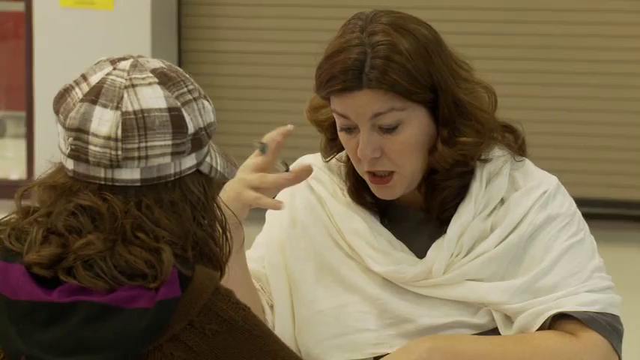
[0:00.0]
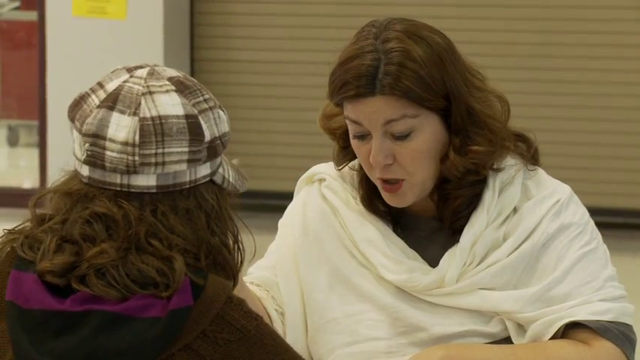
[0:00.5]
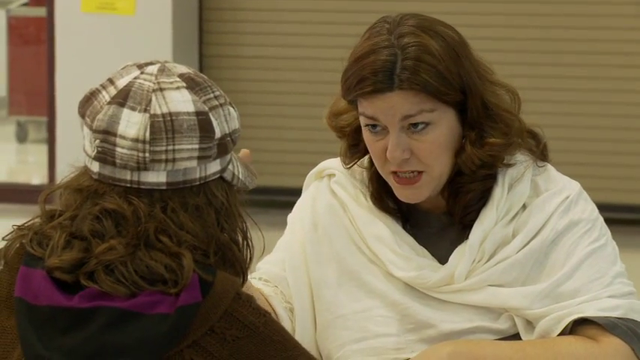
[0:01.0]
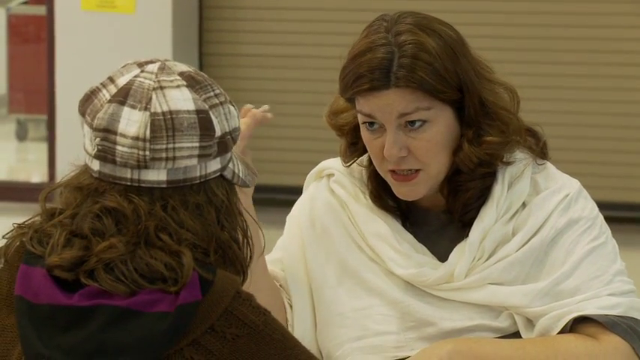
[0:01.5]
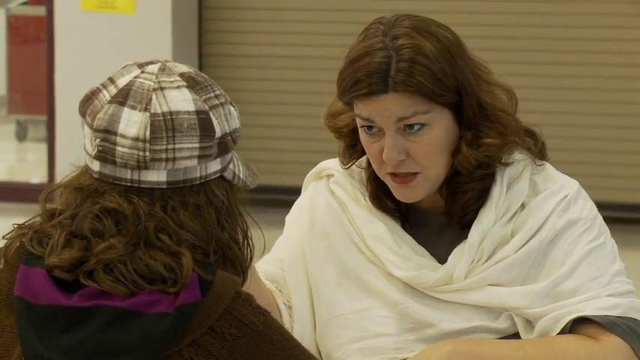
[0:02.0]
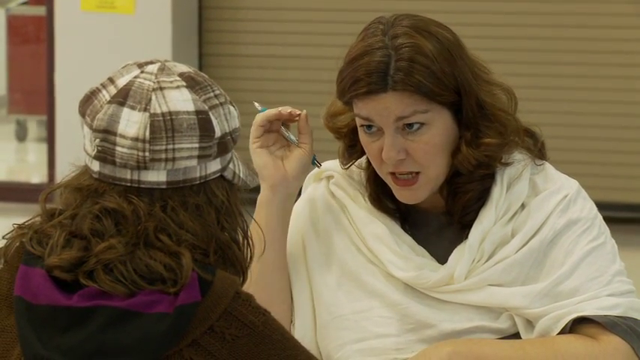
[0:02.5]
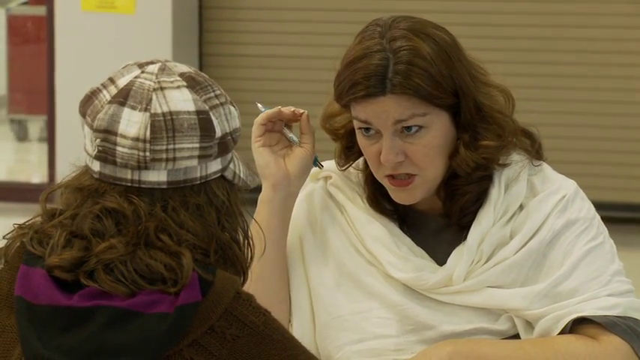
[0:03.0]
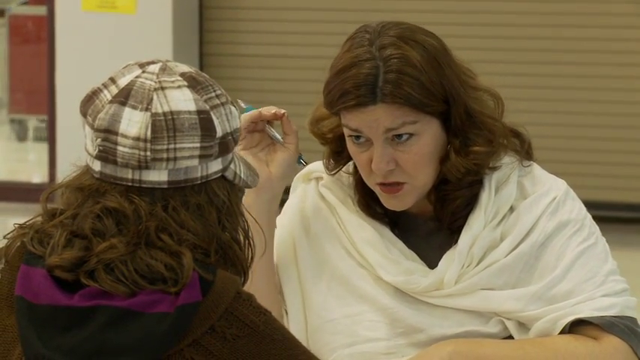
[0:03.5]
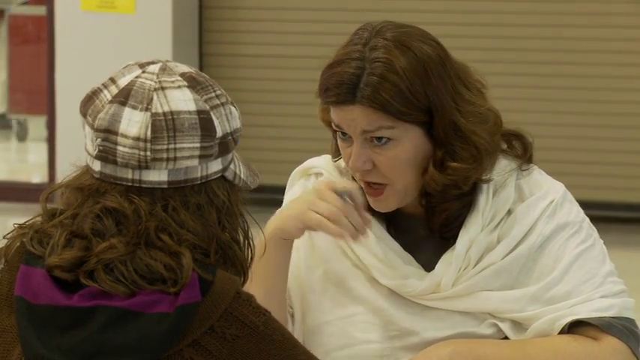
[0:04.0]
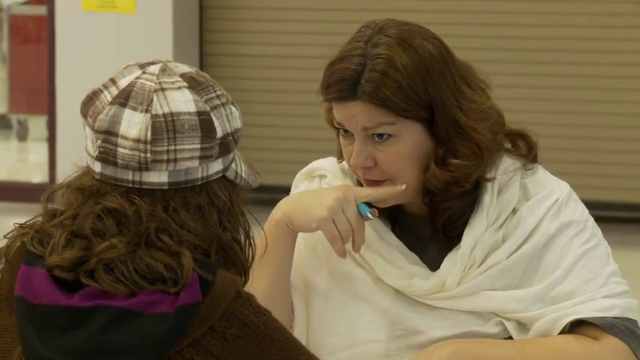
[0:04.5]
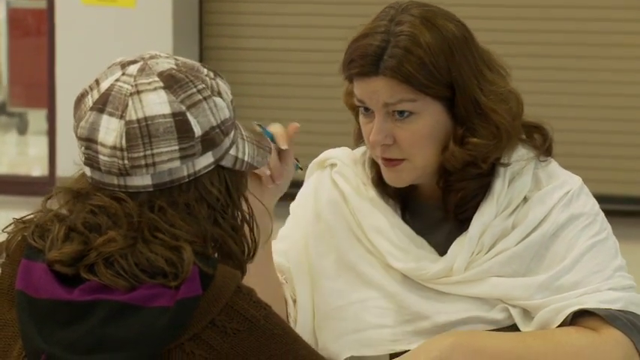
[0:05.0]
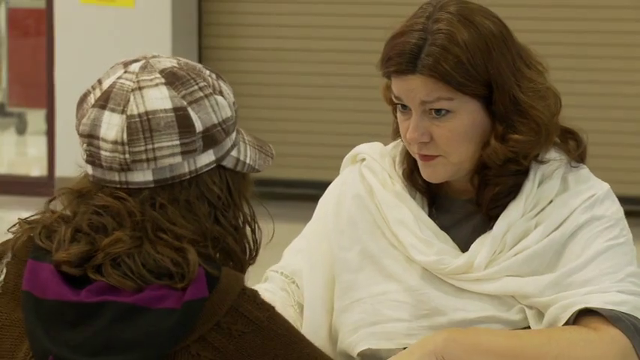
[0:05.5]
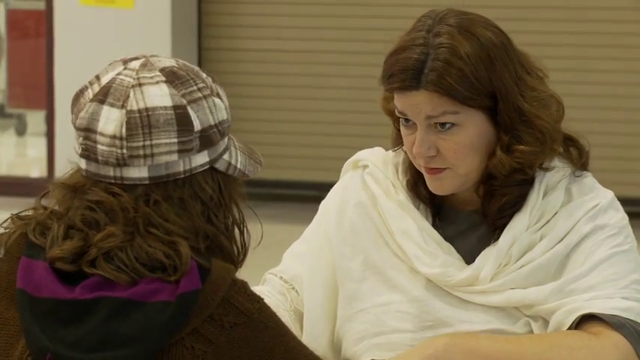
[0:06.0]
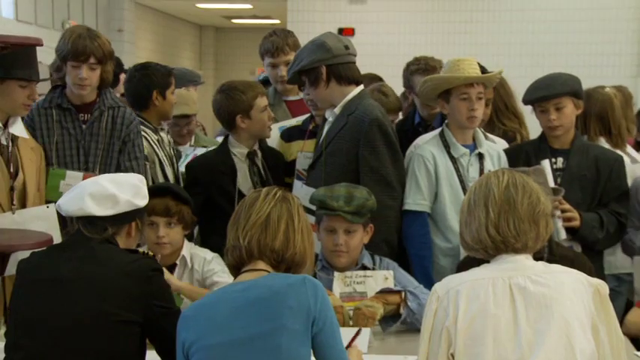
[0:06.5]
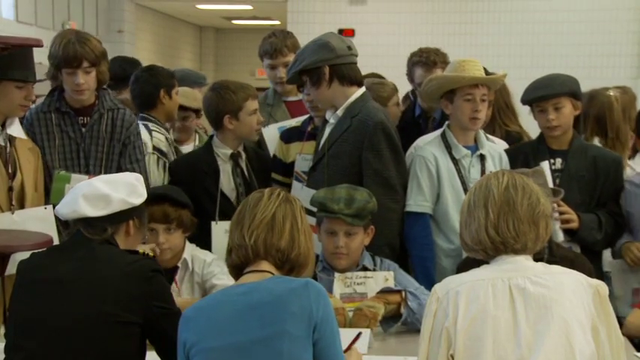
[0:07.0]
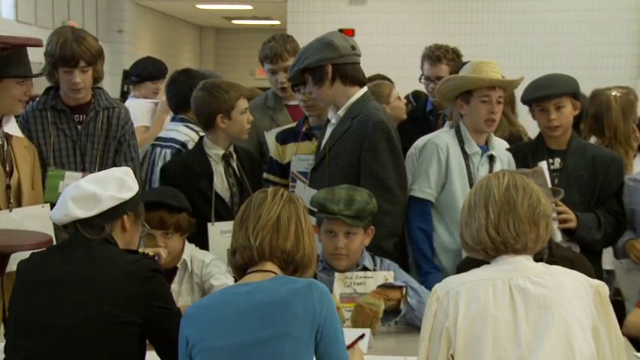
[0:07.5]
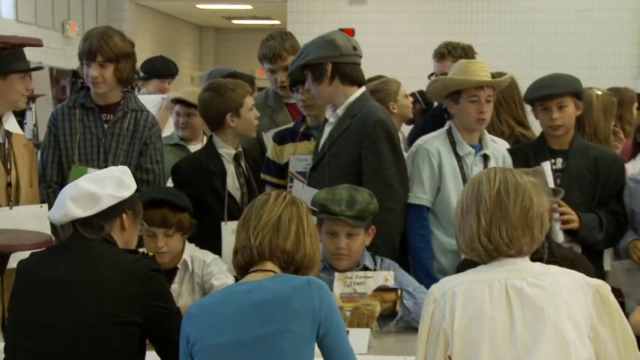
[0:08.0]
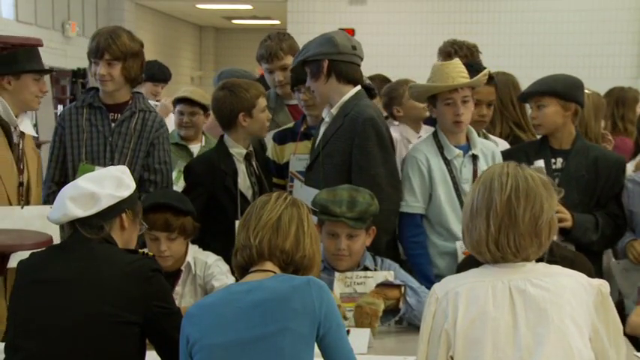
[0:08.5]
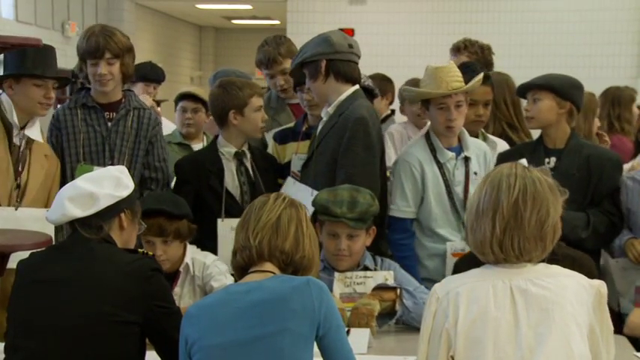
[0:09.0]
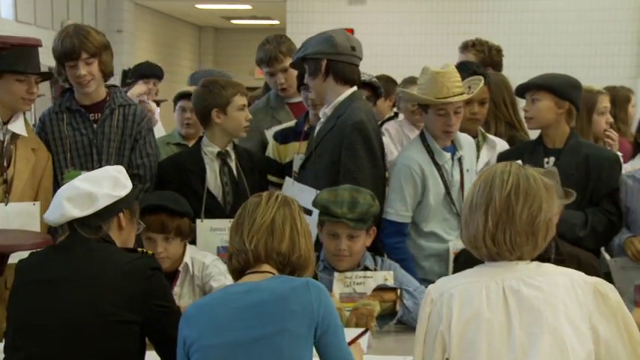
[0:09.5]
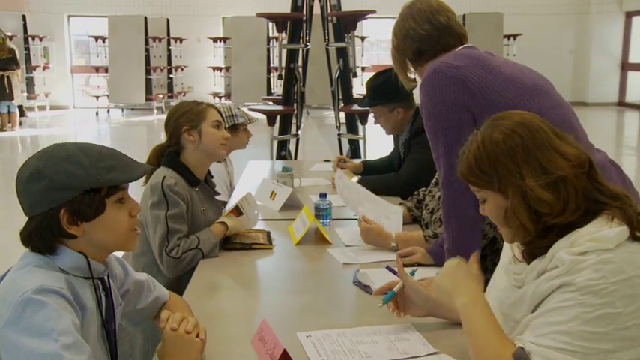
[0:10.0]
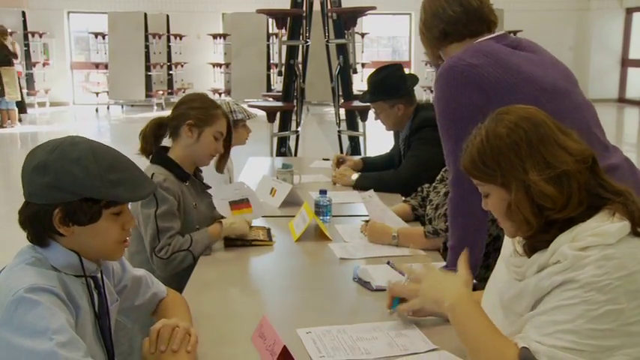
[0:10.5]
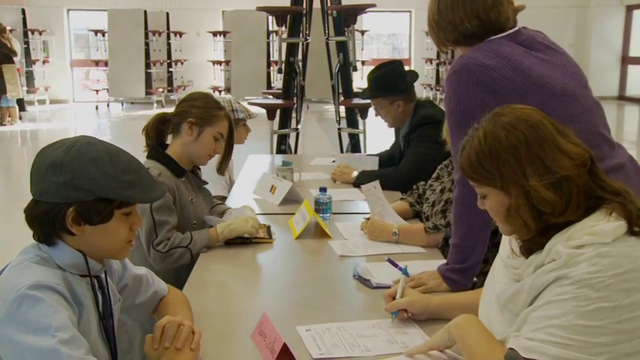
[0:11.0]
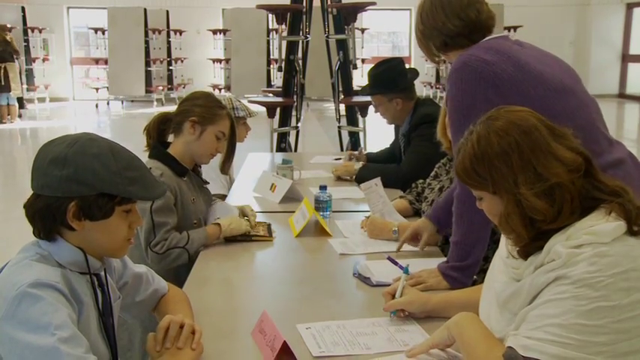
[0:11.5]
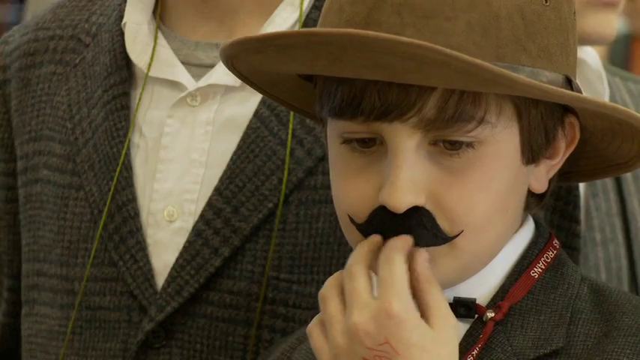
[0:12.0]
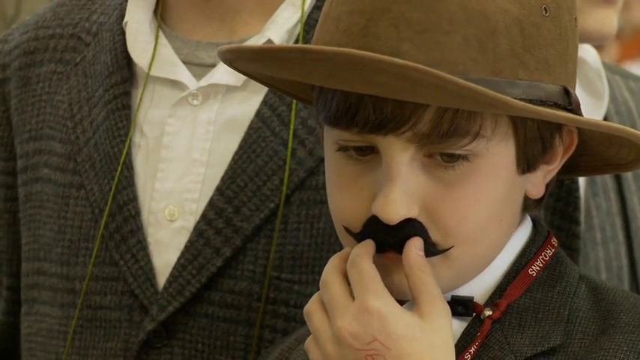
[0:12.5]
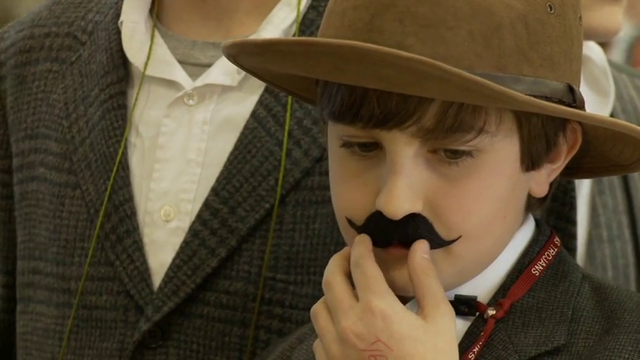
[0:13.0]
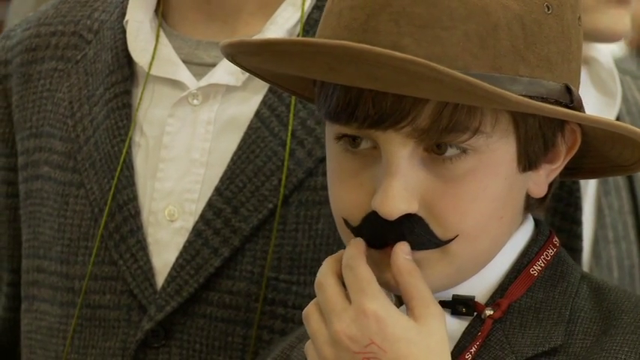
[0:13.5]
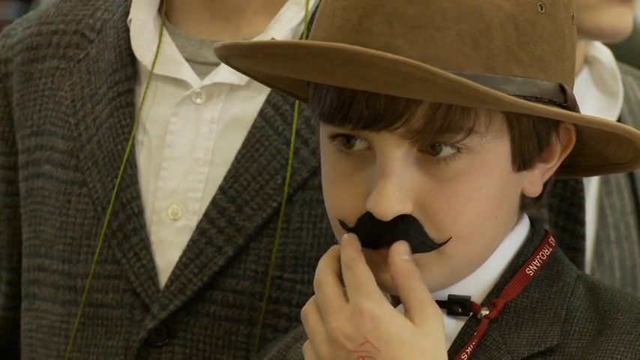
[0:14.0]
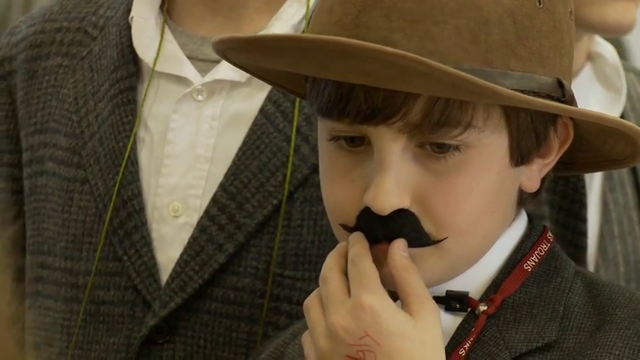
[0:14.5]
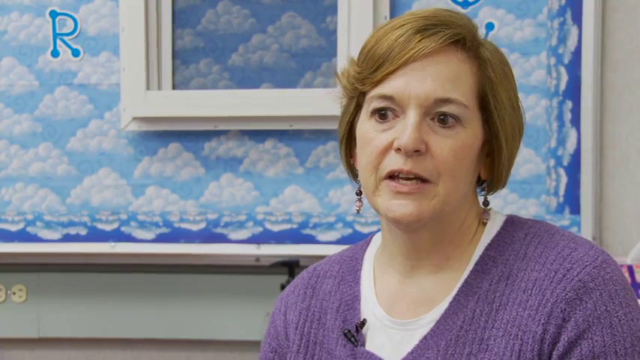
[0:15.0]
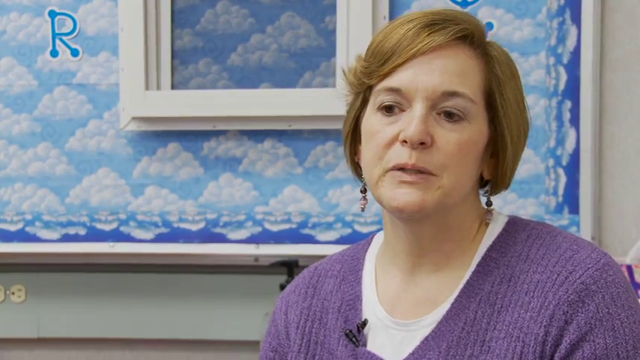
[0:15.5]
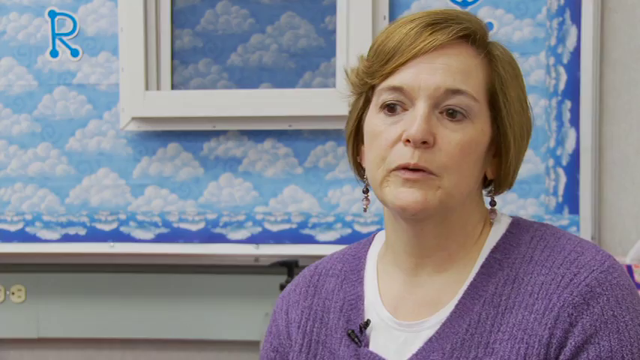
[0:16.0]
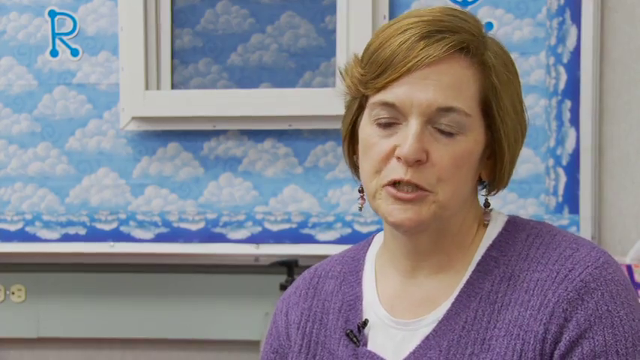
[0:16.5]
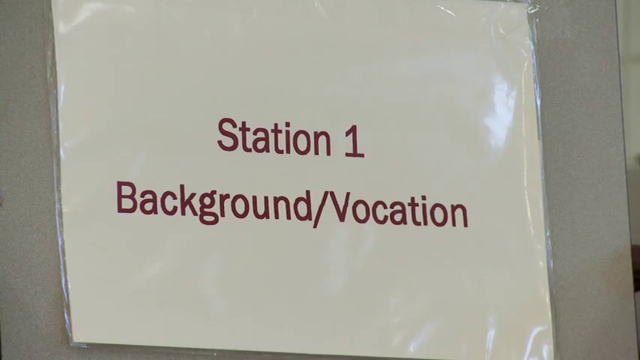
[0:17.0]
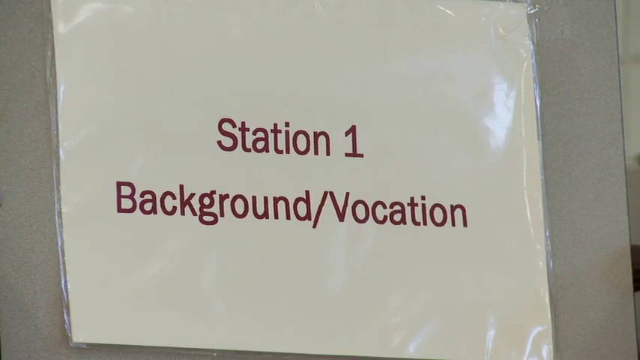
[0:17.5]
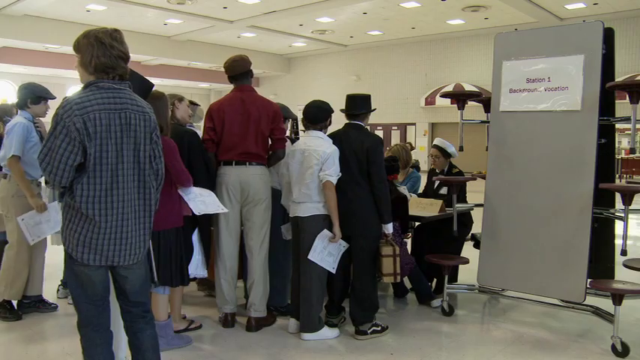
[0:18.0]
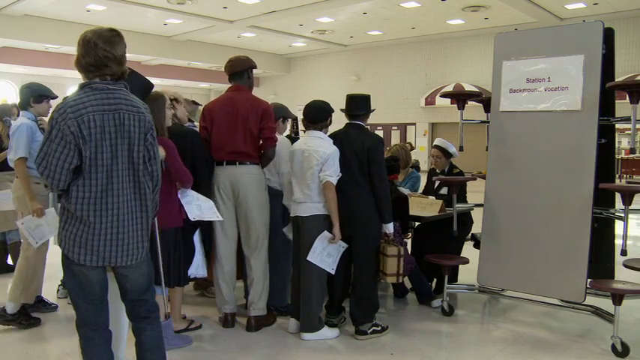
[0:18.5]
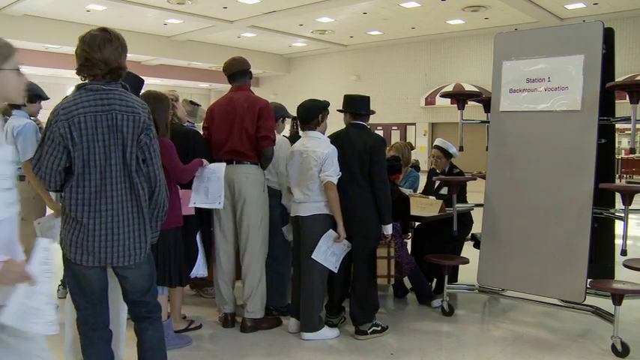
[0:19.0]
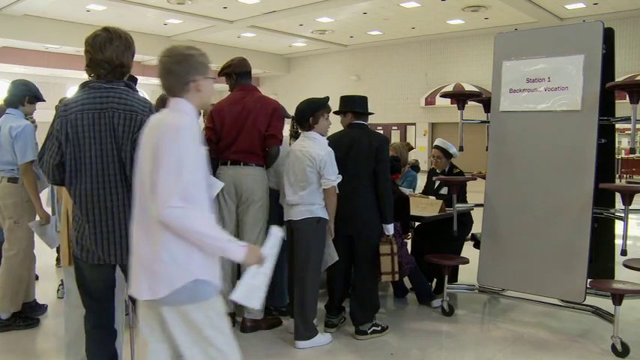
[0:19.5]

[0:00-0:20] Two women appear, then the video cuts to a wide shot of a crowd and back to the women, and it keeps jumping between people. The event looks like it might be some sort of sign-up or convention, possibly voting, or possibly an audition. Many people are in what looks like period clothing, and a boy appears to wear a fake mustache and a cowboy hat. There are at least 30, maybe 40 people, with varying numbers dressed up versus in plain clothes. A sign reads "station one background / vocation," suggesting this may be some sort of living history project, possibly something like a career fair.